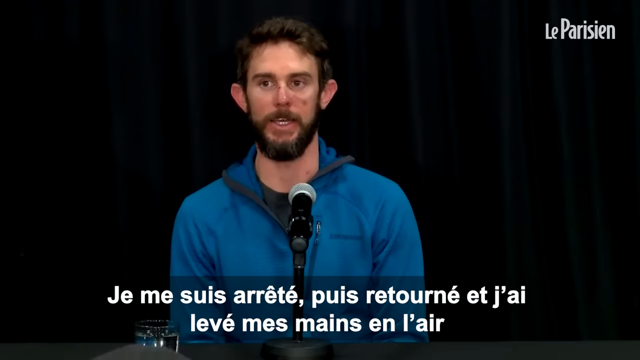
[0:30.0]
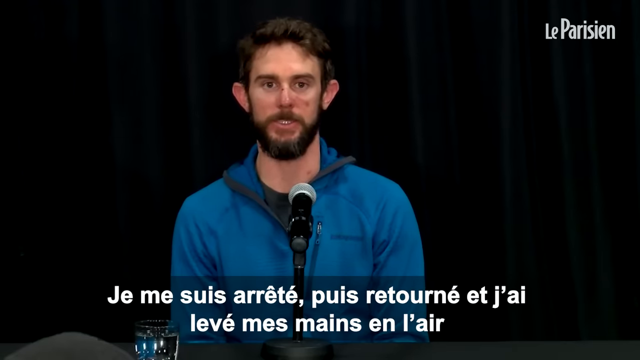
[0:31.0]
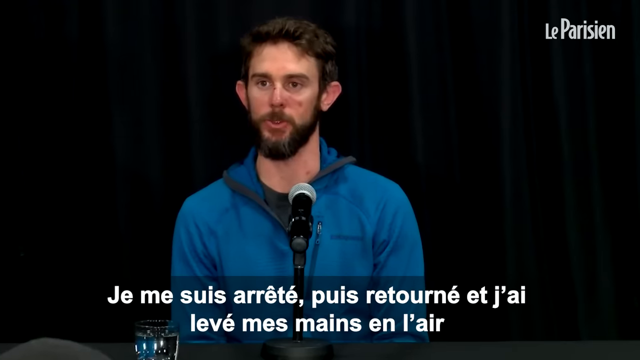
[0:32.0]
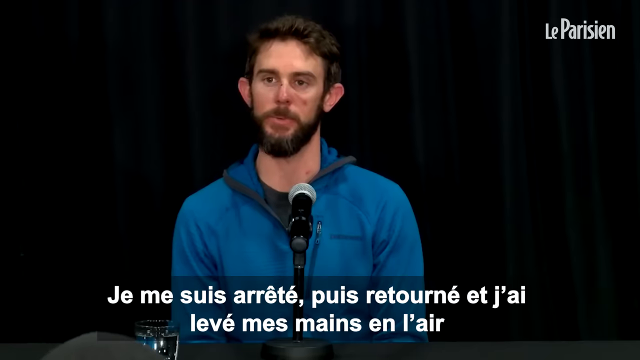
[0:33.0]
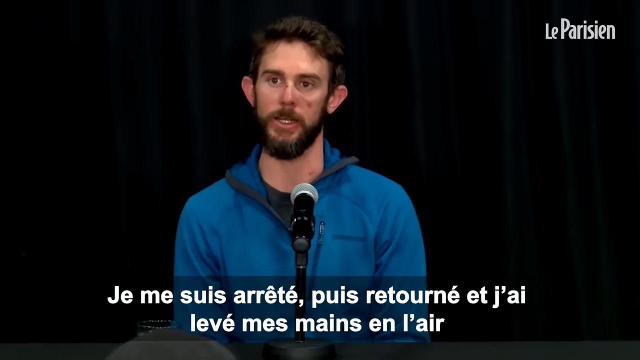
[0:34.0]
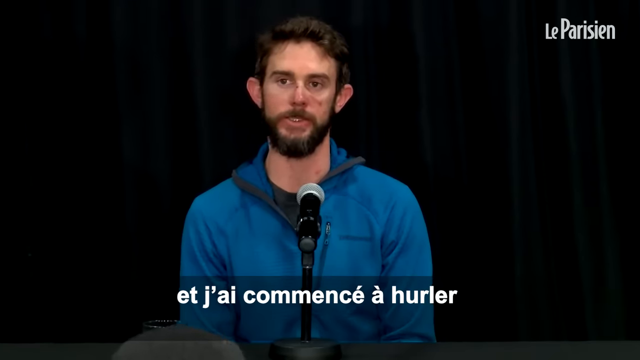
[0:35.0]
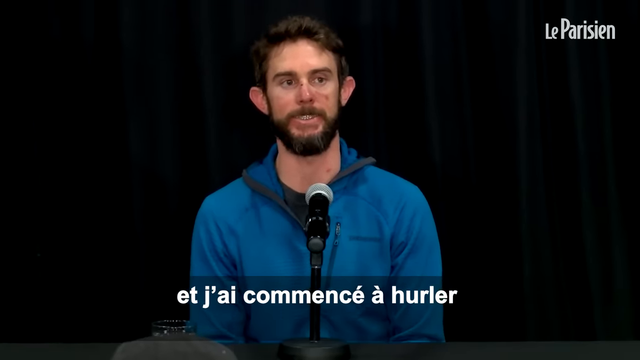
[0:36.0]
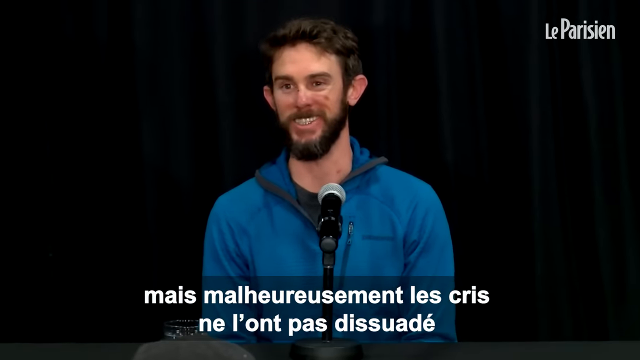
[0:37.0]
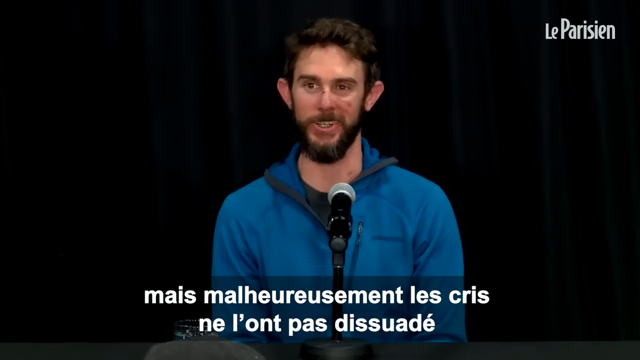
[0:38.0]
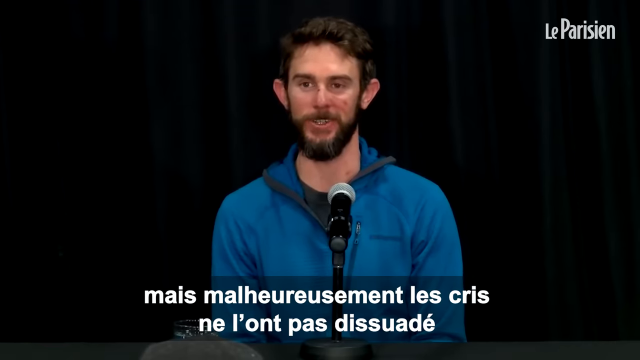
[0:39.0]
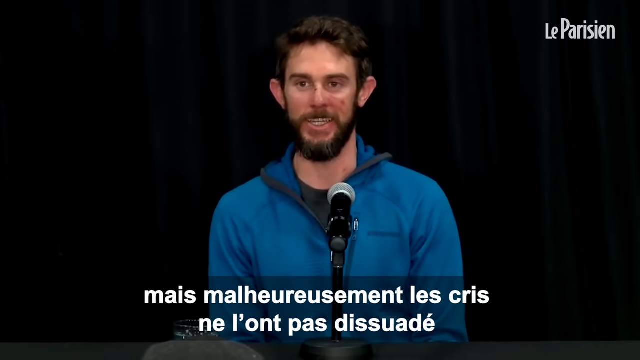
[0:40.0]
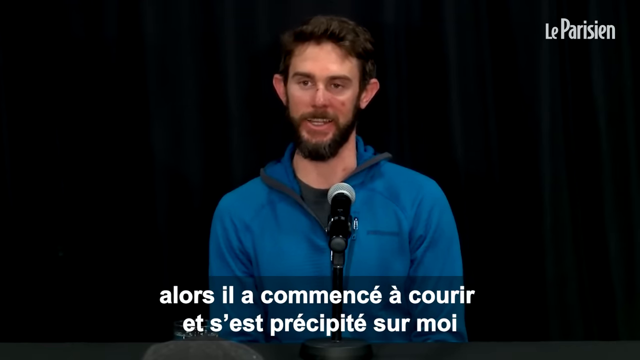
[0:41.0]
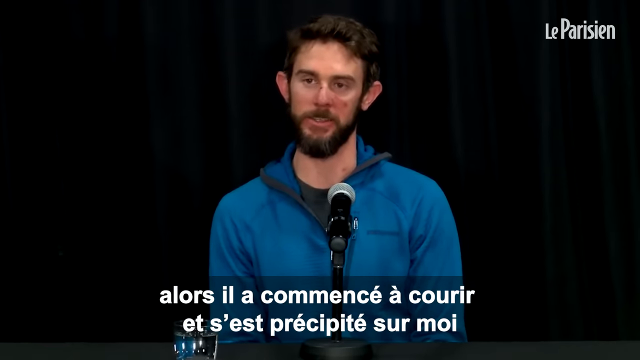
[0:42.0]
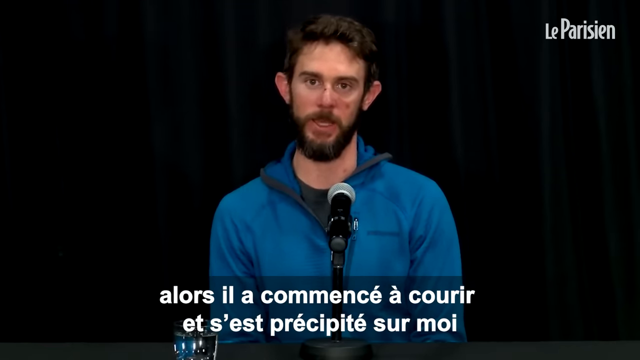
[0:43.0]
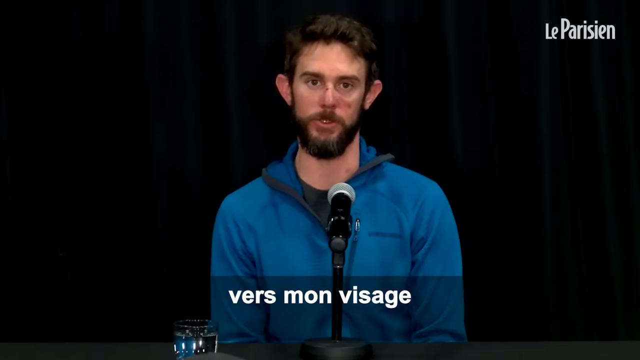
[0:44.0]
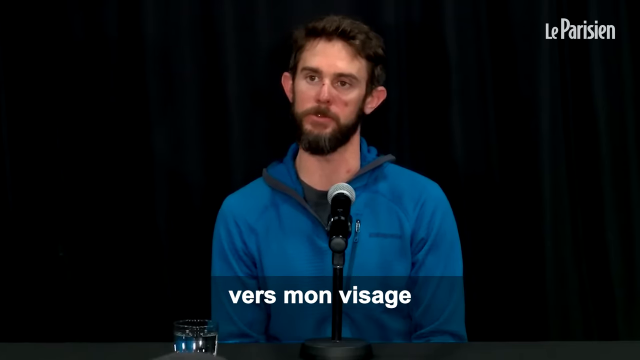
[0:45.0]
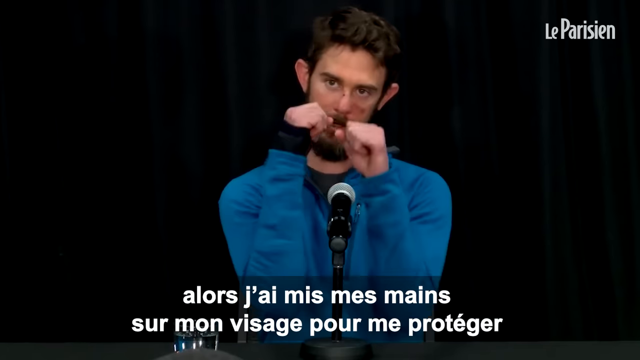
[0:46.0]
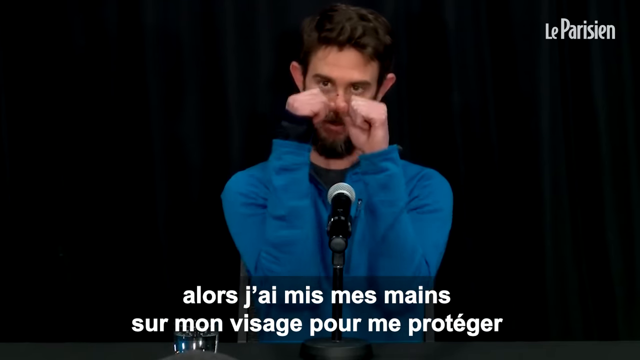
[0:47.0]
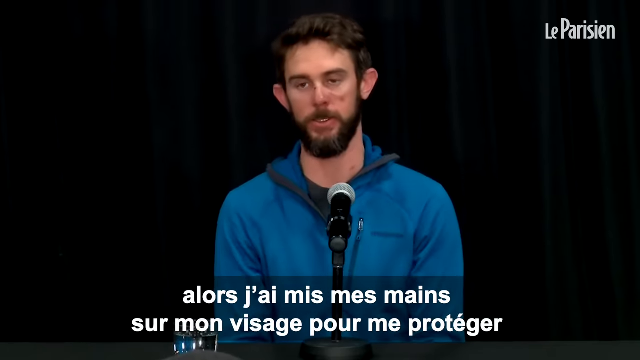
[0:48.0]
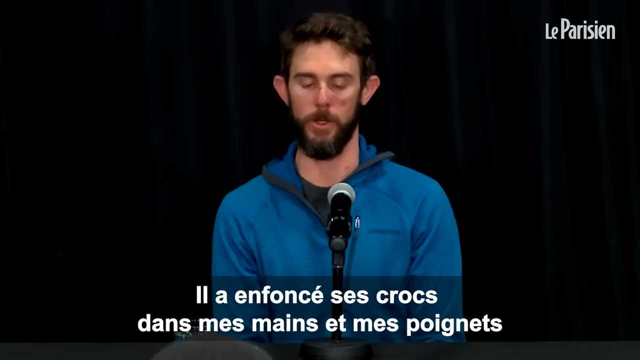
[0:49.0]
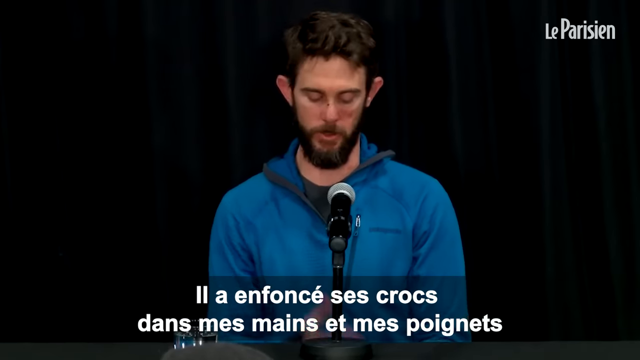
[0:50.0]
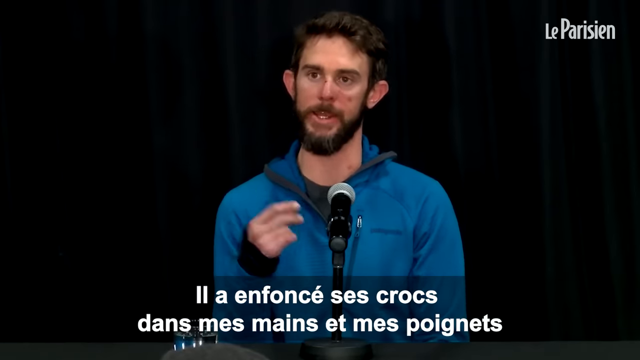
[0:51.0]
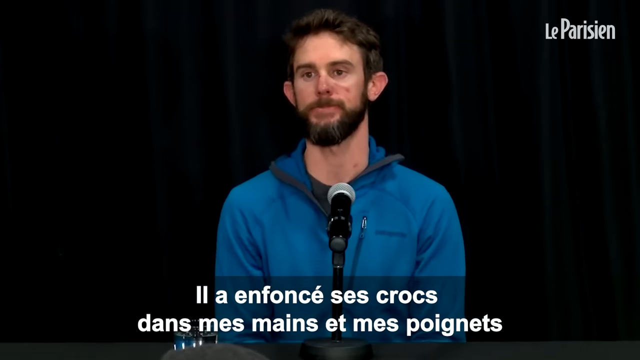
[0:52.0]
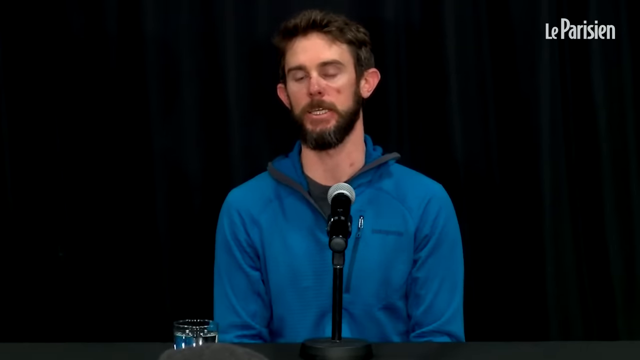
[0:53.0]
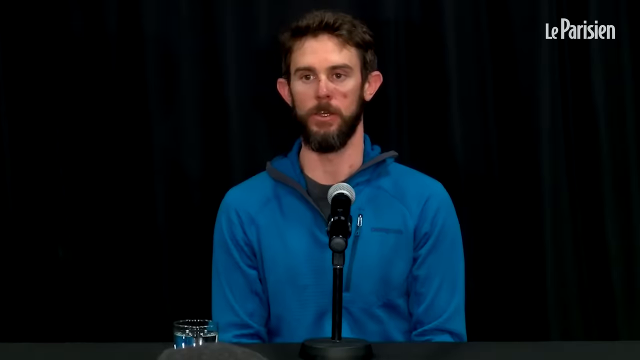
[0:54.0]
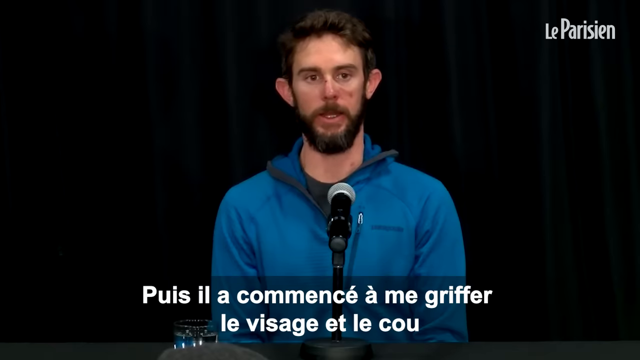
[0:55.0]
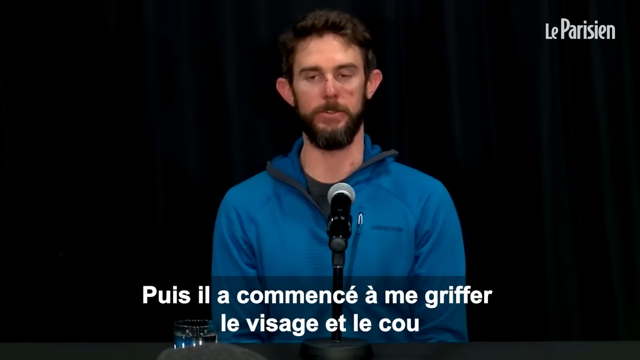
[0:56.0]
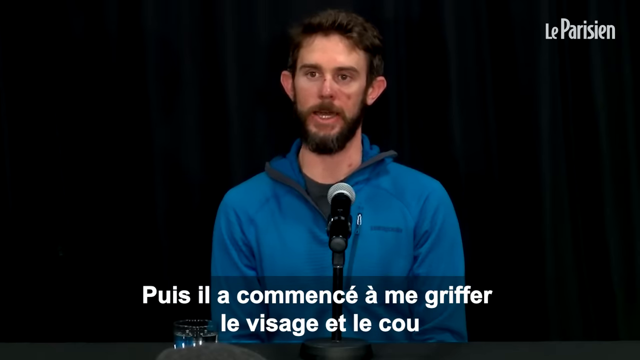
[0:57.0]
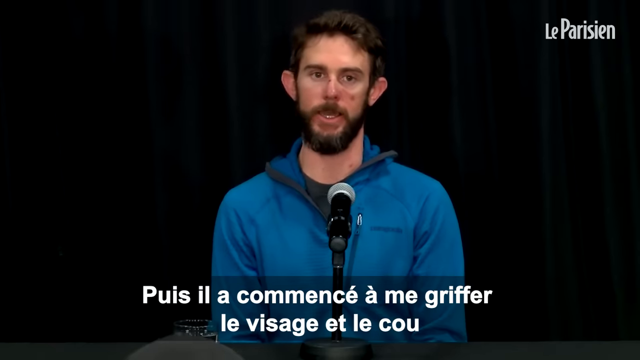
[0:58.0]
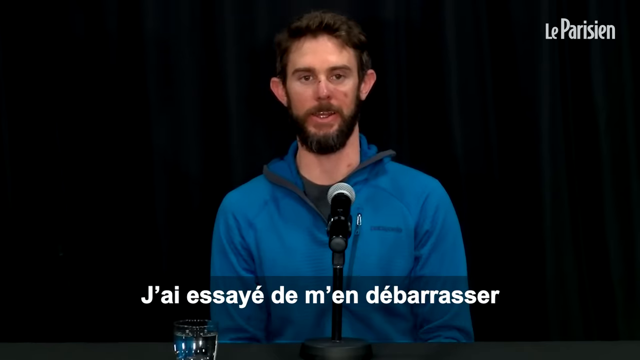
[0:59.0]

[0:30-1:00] The man talks into the camera and the microphone, wearing a blue jacket with a black shirt underneath. He has a beard and short brownish-blackish hair and is sitting in front of a black curtain. White text on a black background is at the bottom of the screen, and a logo at the top right says "La Parisian." The man talks and looks around, sometimes showing his teeth. He raises his two hands into the air in front of his face to protect it, then gestures with his right arm. The subtitles change a couple of times every few seconds as he talks. The man remains still as he talks into the camera, and the scene never changes away from him.